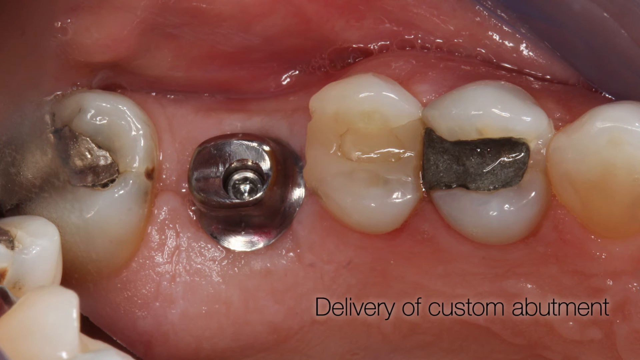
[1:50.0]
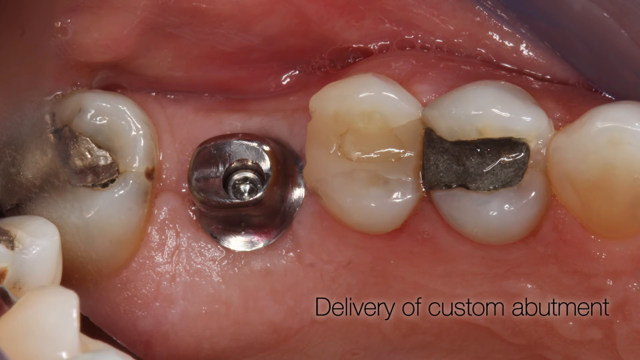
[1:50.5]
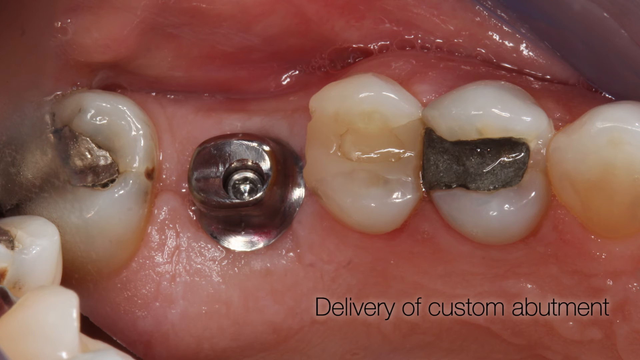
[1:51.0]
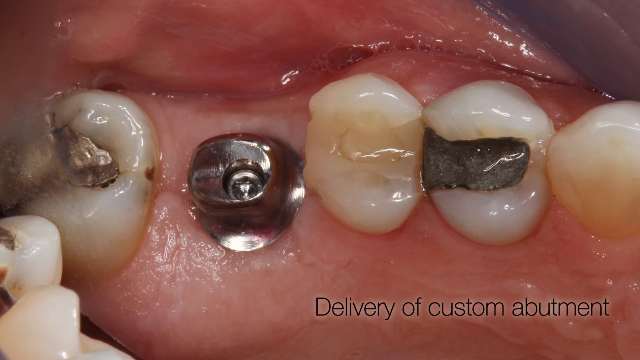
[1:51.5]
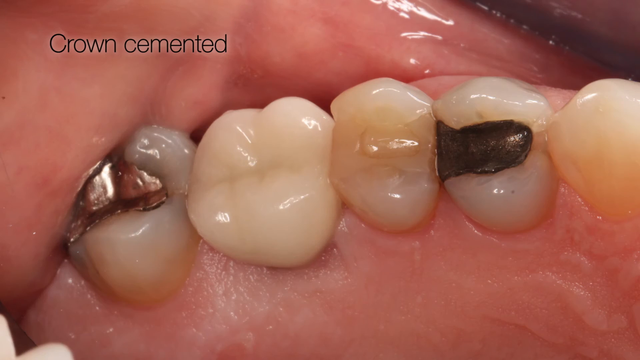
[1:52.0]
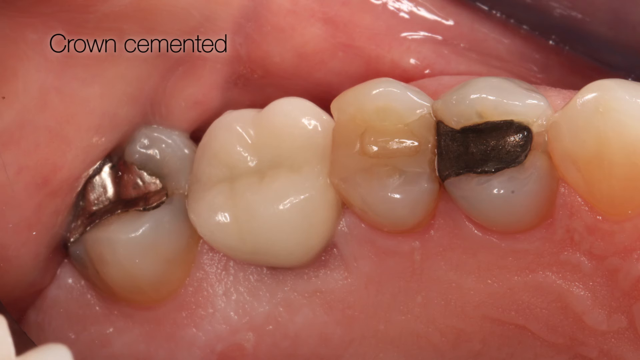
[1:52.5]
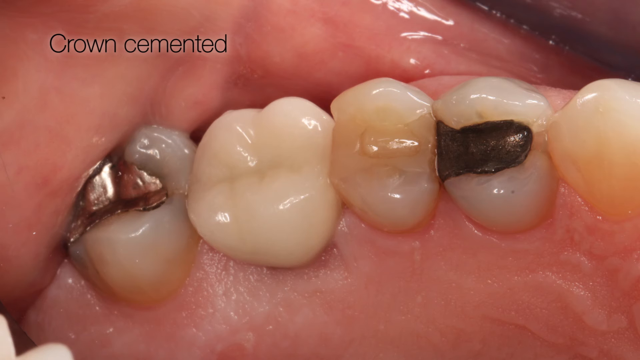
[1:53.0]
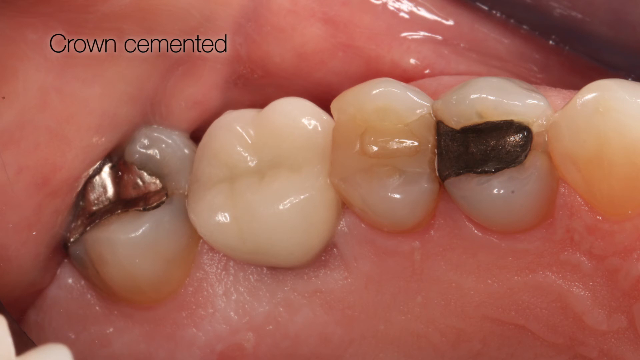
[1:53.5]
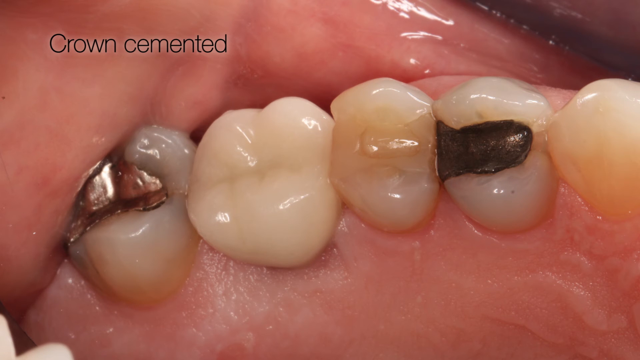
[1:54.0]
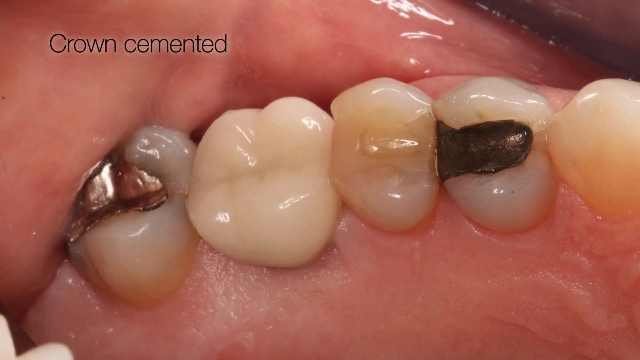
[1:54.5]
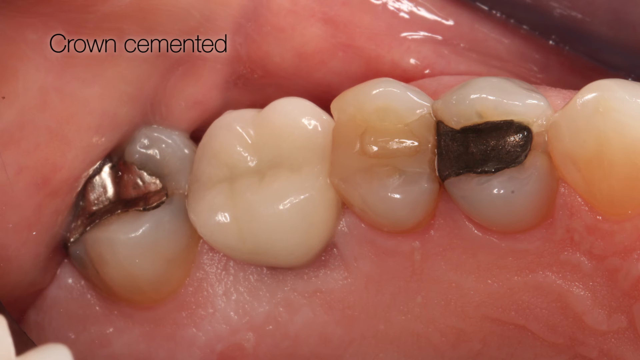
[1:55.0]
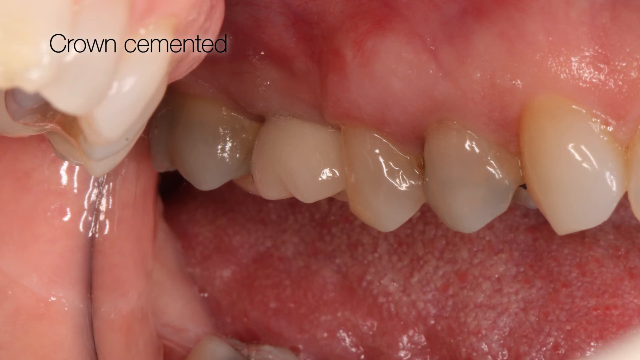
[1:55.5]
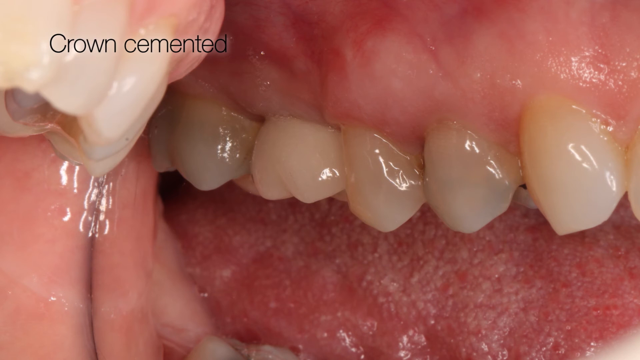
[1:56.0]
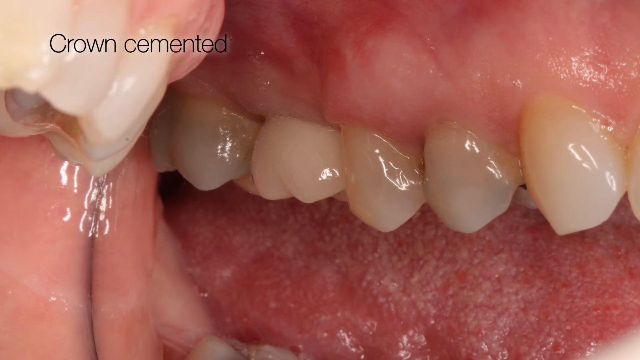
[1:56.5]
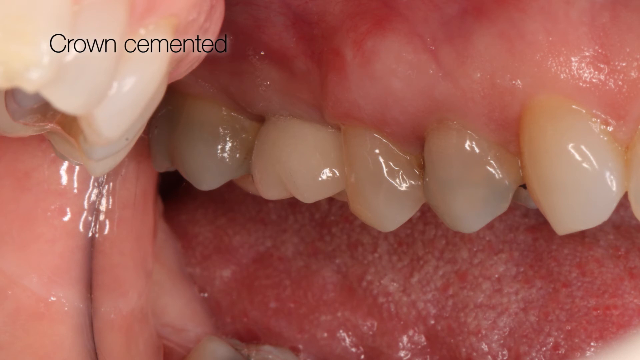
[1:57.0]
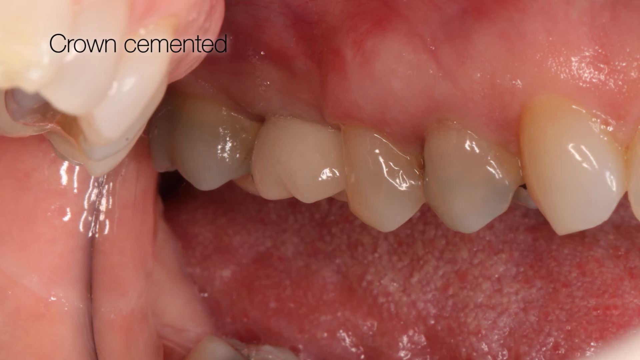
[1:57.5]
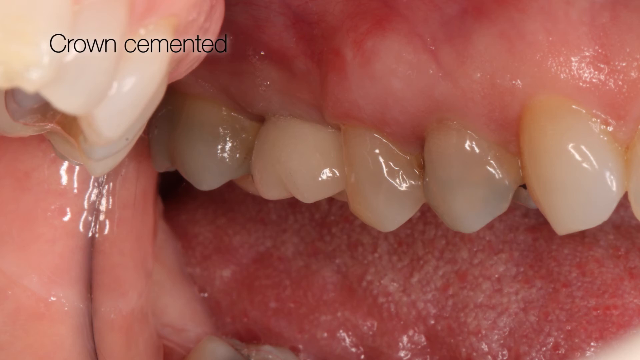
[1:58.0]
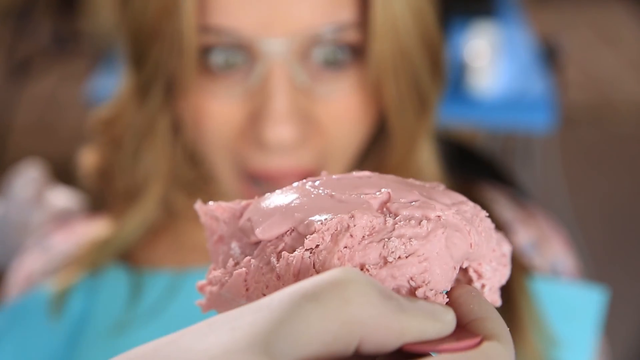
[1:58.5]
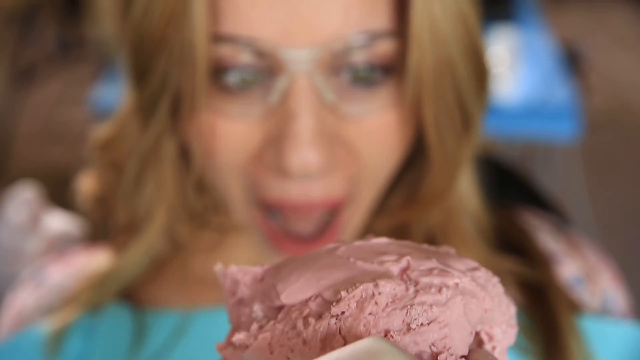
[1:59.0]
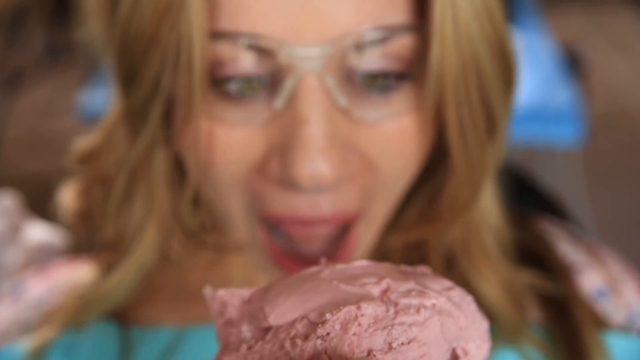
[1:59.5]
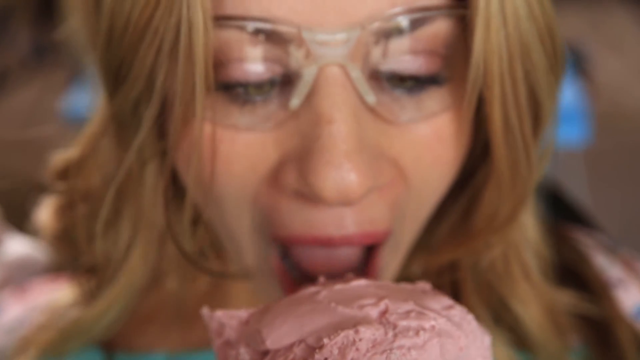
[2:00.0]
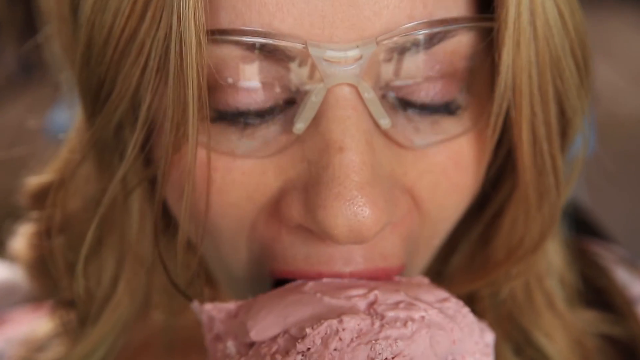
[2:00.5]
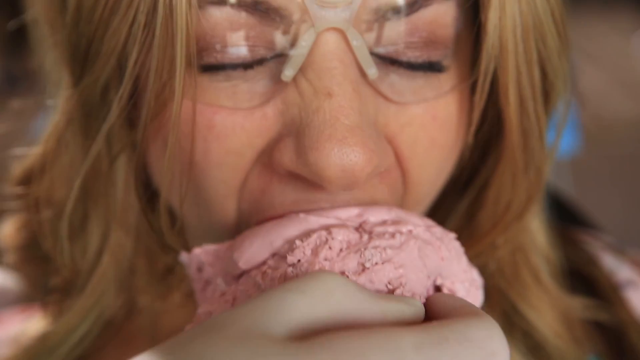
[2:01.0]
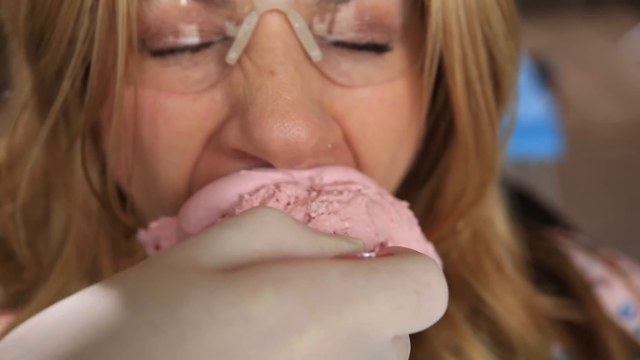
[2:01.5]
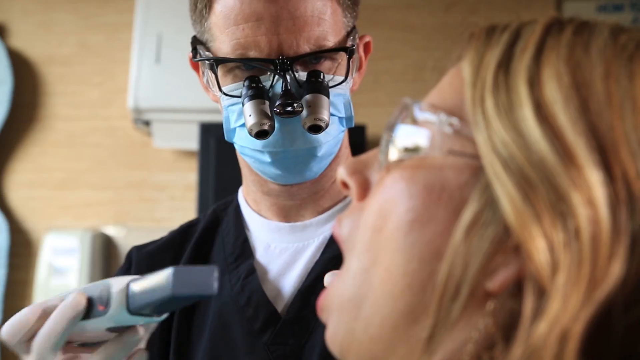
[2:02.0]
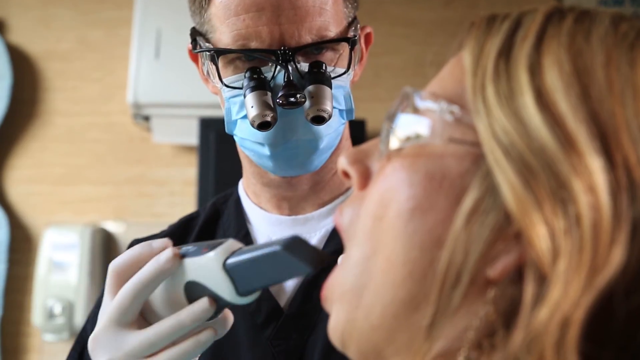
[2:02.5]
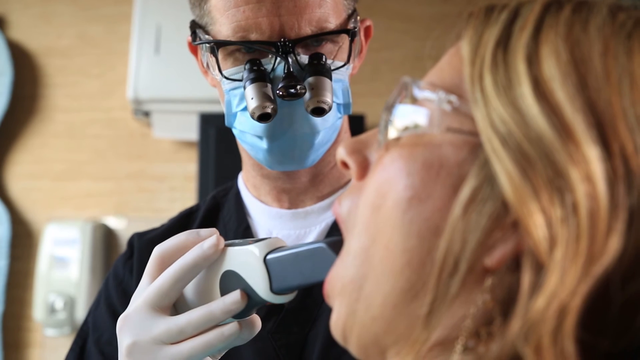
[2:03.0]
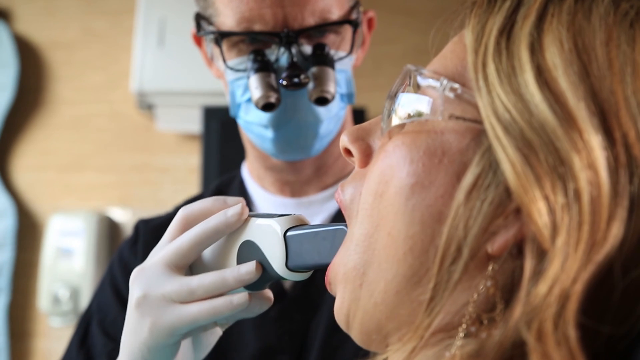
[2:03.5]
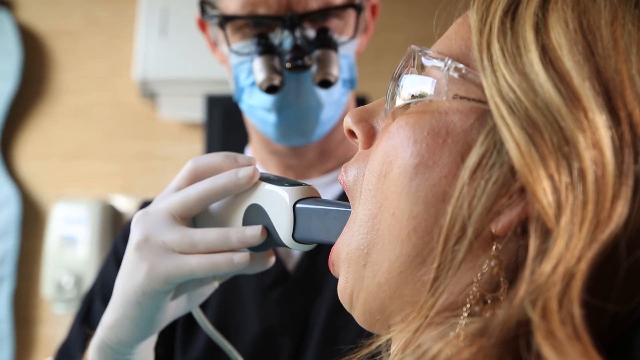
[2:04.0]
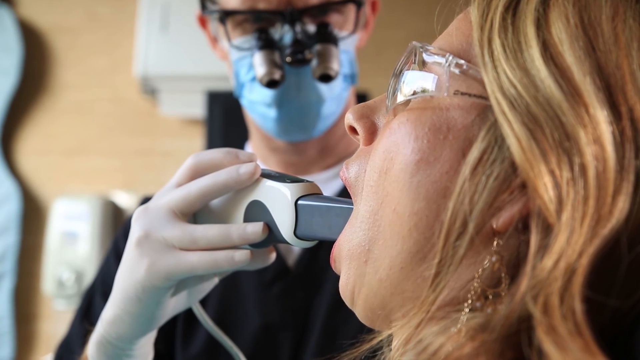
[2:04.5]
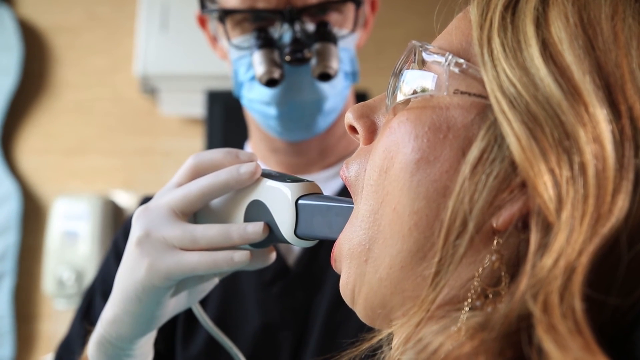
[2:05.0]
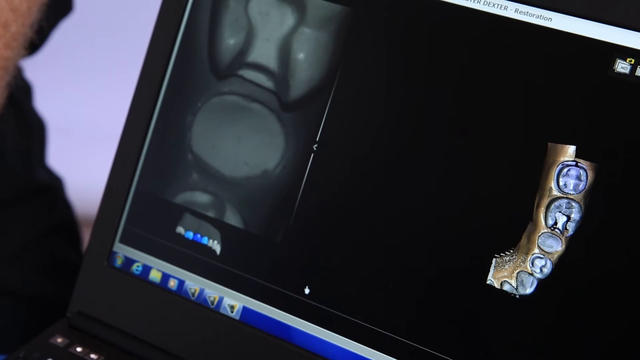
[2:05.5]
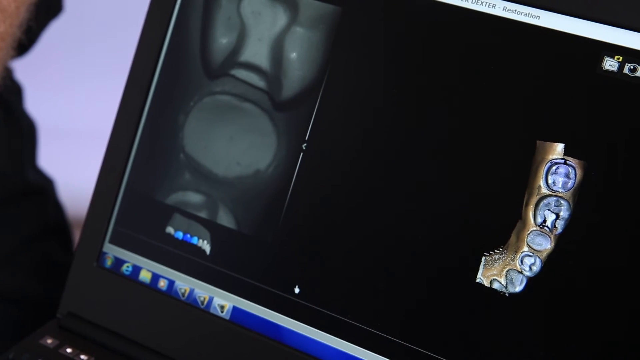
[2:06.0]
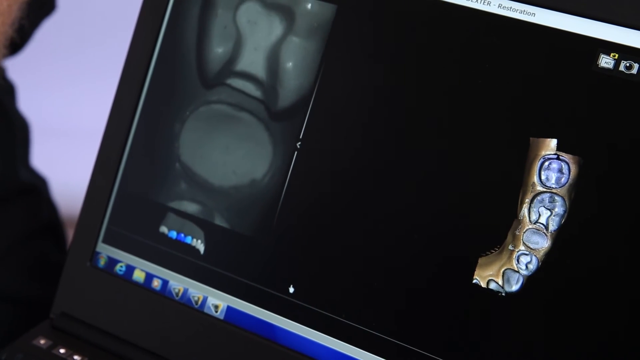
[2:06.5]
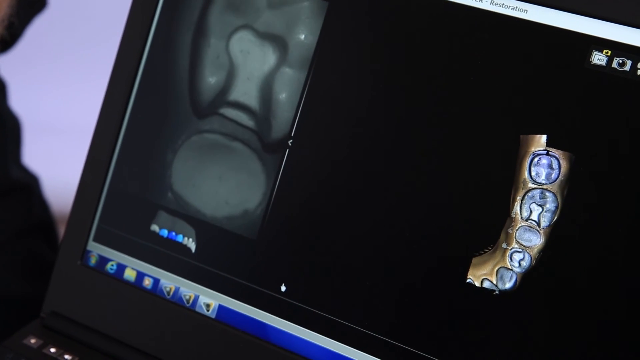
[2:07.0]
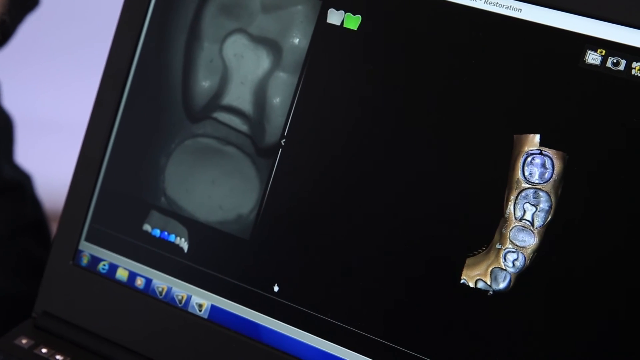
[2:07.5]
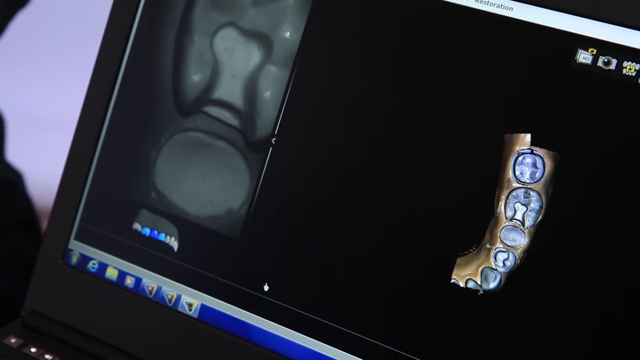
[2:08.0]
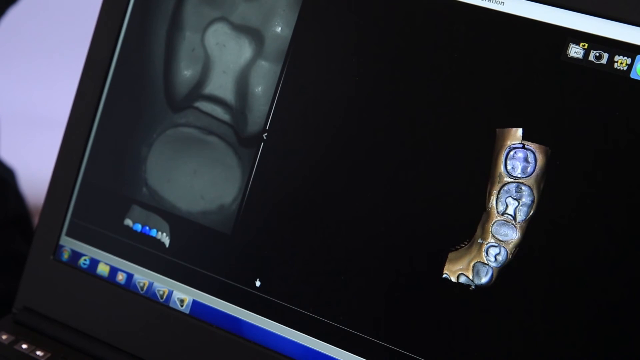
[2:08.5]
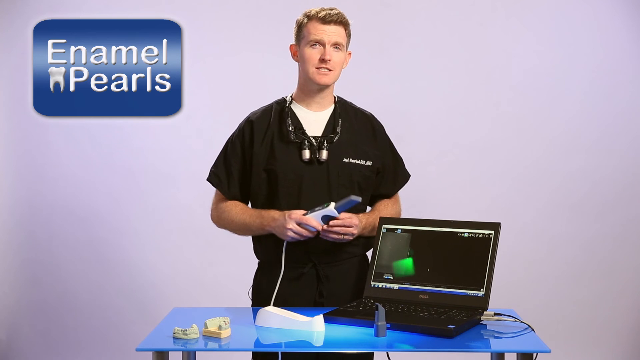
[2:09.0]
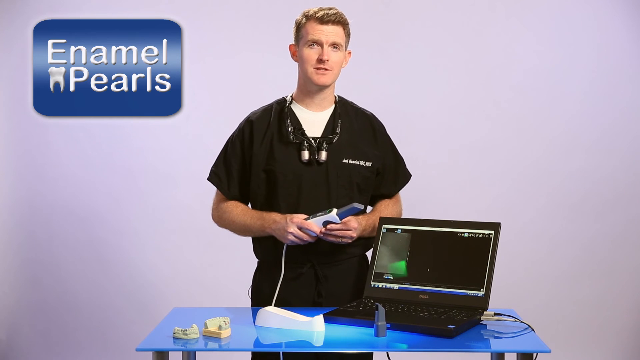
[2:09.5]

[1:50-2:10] Zoomed-in close-up shots of teeth show a silver screw in one of the tooth areas, with the text "delivery of custom abutment" at the bottom left; the teeth have crowns. Another set of teeth shows two crowned teeth, and instead of the screw, what looks like a fake tooth is in the area, with the text "crown cemented". Another angle of the teeth still shows "crown cemented" at the top left, and the tooth looks much more polished in that area. Then a woman wearing glasses looks excited as someone brings what appears to be a cake to her mouth and she bites down; it looks like it is actually not a cake but a mold that takes an impression of the teeth.